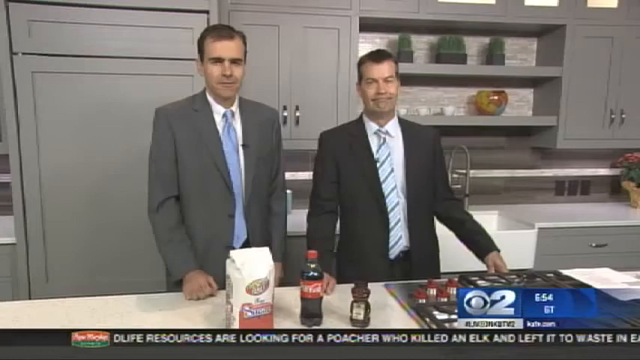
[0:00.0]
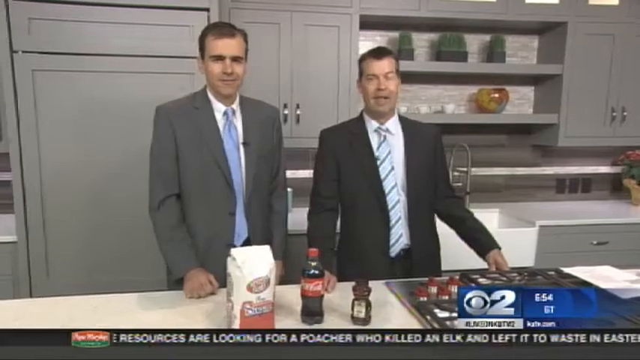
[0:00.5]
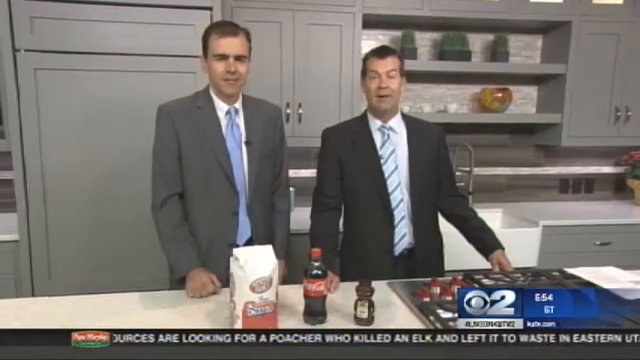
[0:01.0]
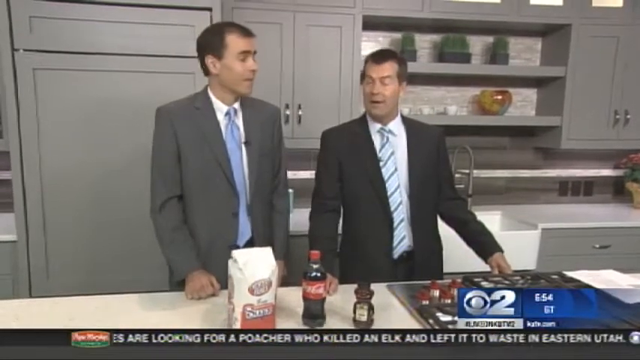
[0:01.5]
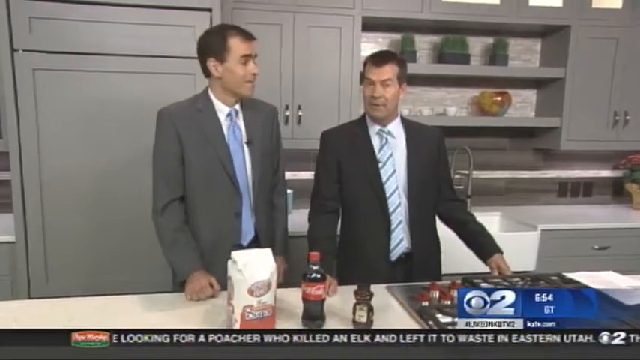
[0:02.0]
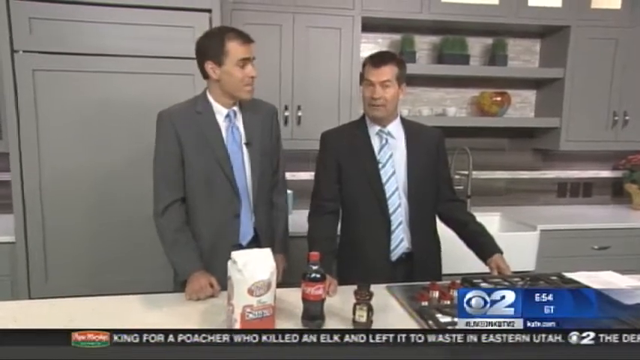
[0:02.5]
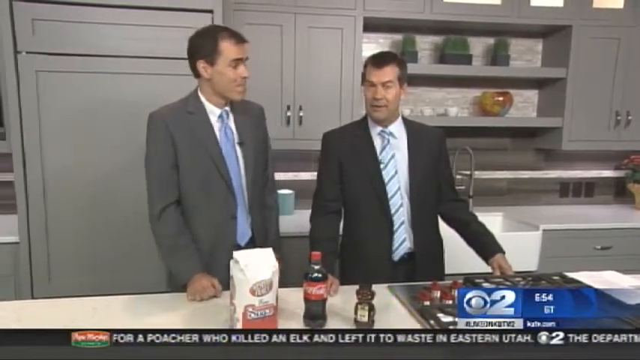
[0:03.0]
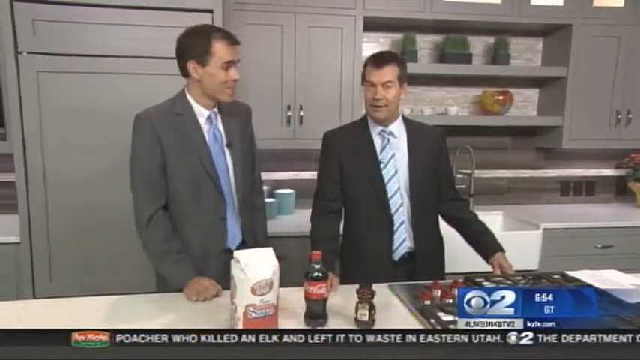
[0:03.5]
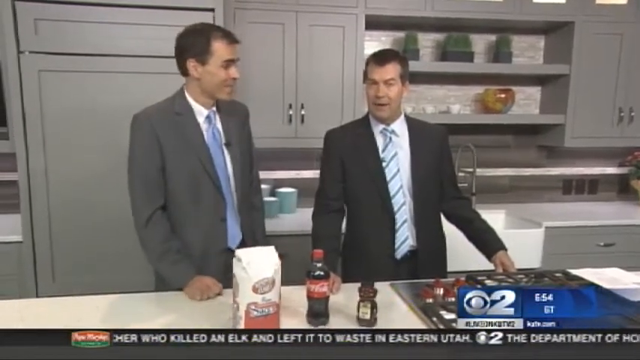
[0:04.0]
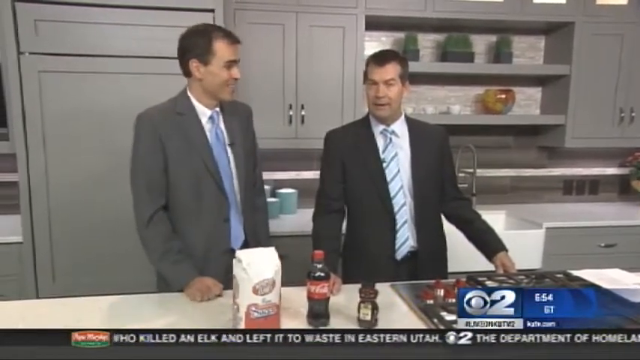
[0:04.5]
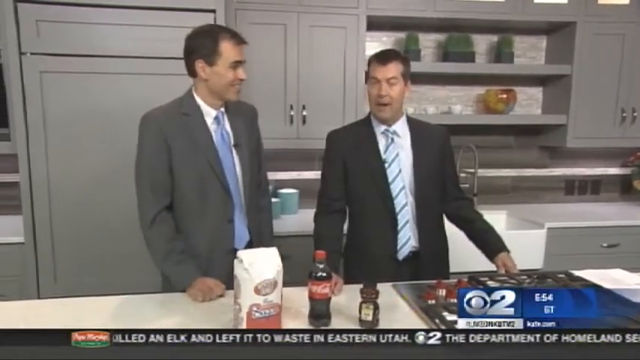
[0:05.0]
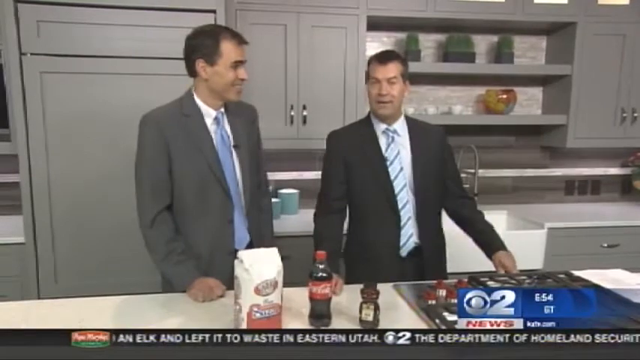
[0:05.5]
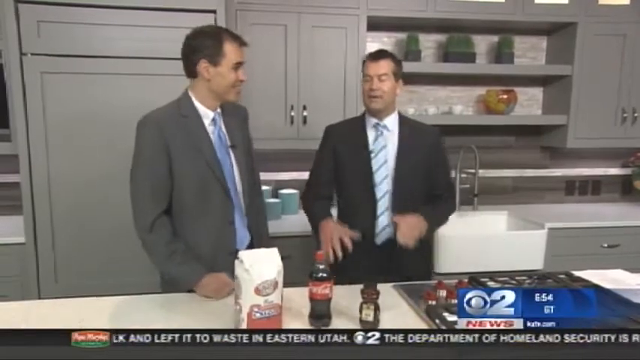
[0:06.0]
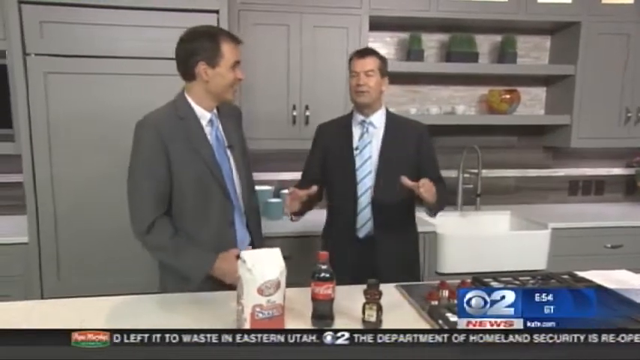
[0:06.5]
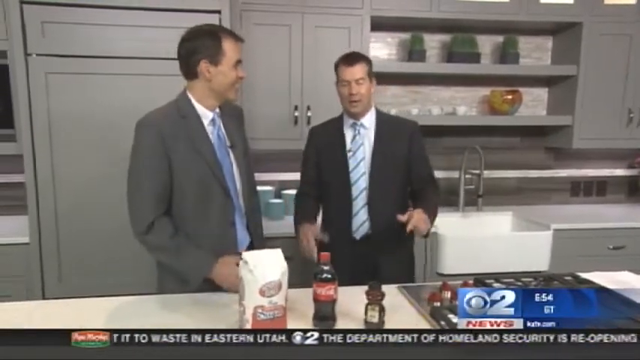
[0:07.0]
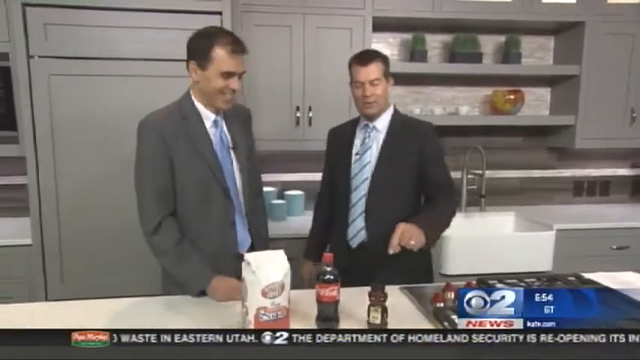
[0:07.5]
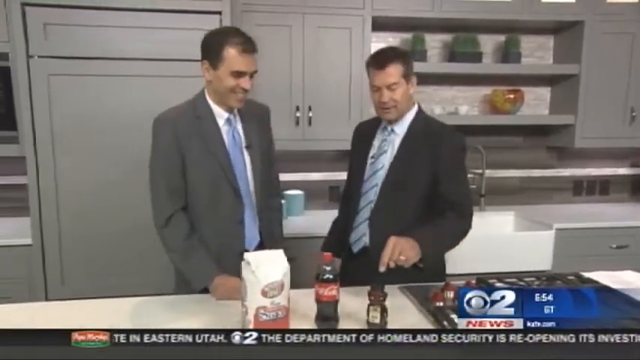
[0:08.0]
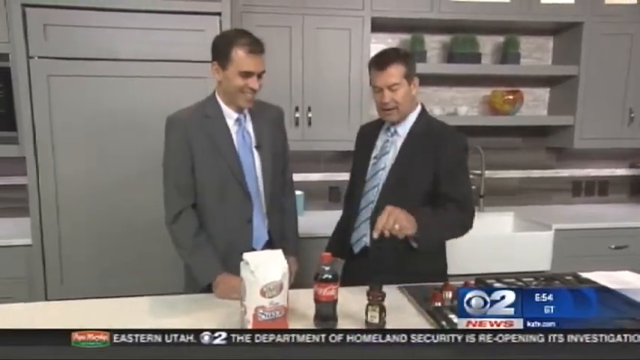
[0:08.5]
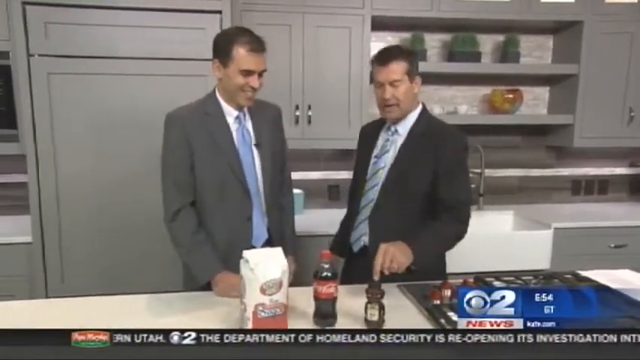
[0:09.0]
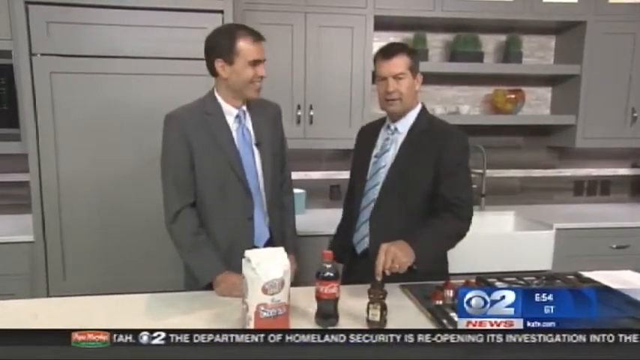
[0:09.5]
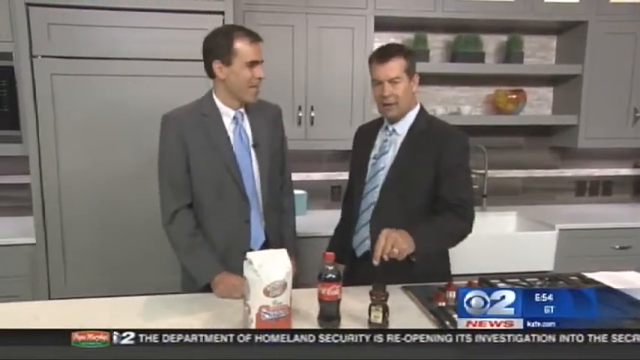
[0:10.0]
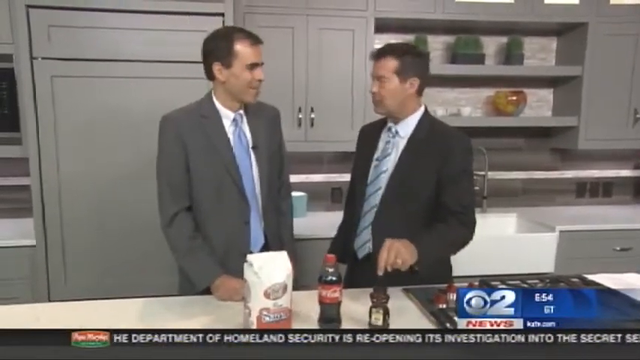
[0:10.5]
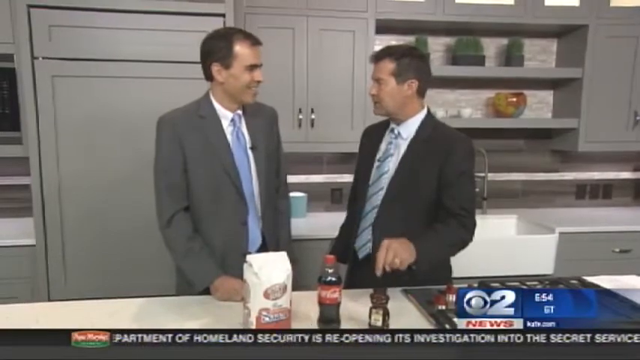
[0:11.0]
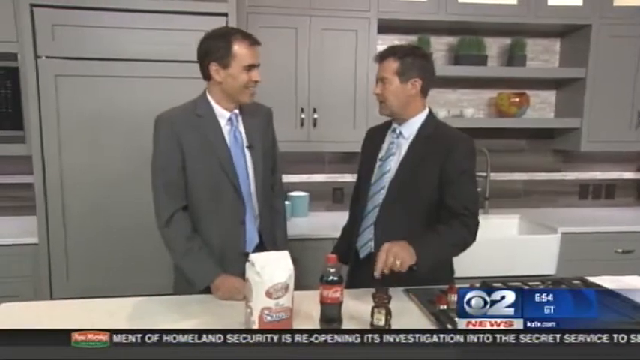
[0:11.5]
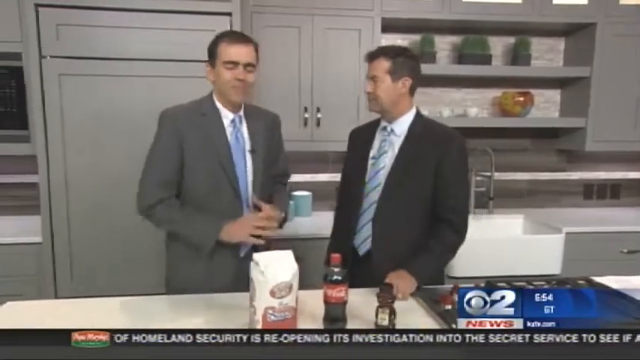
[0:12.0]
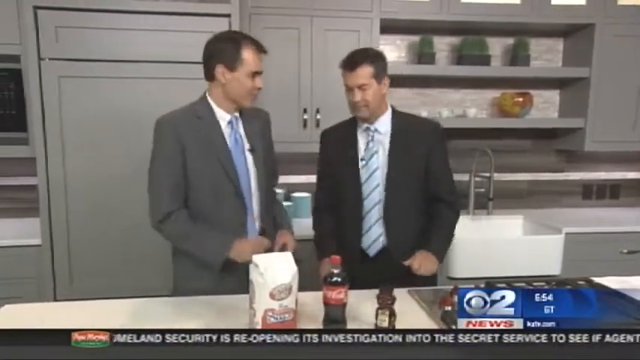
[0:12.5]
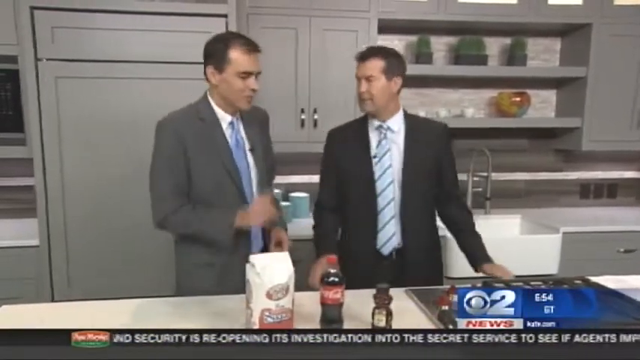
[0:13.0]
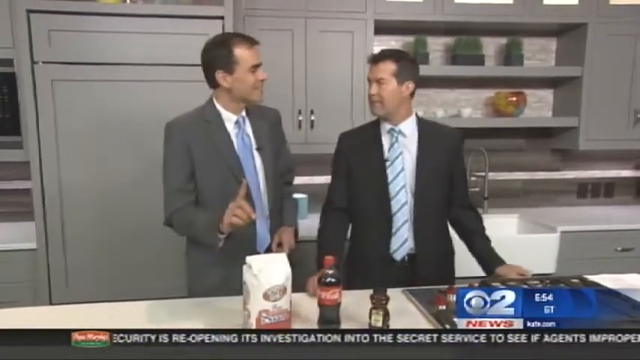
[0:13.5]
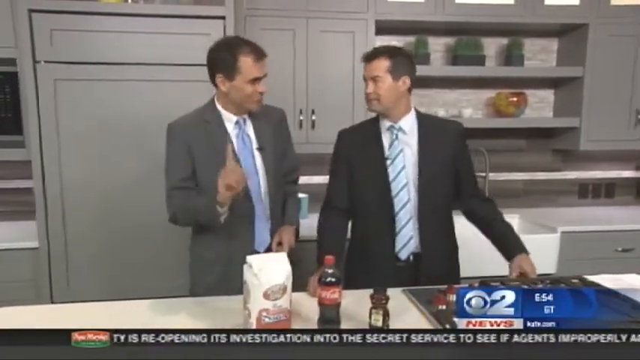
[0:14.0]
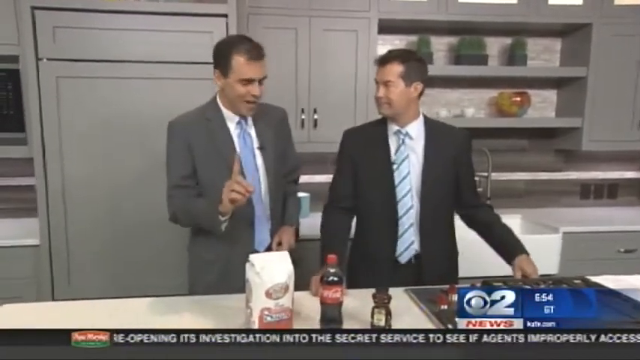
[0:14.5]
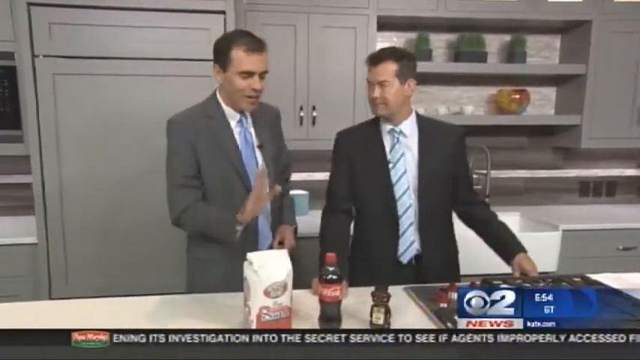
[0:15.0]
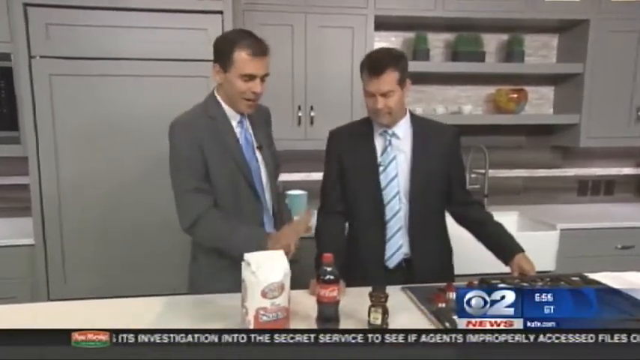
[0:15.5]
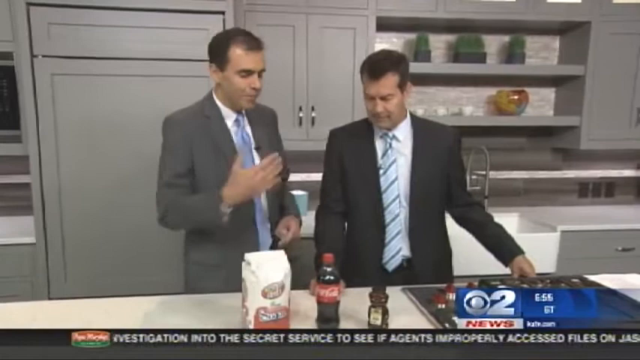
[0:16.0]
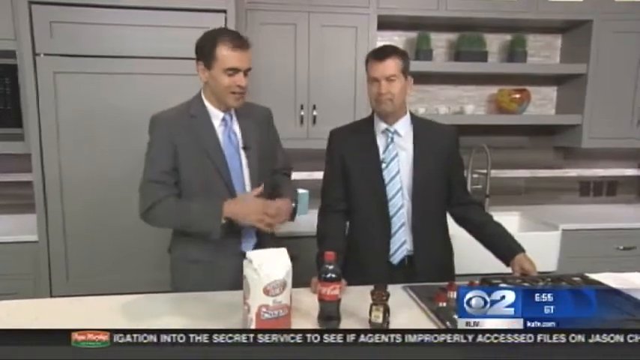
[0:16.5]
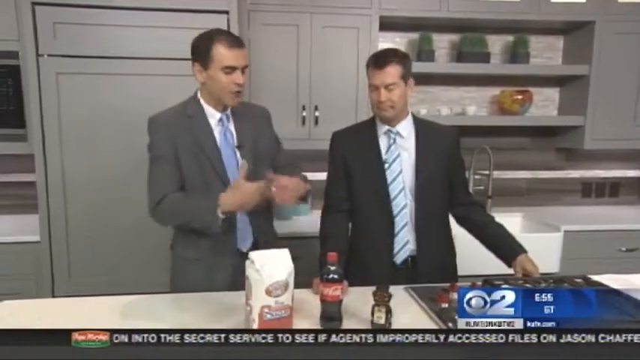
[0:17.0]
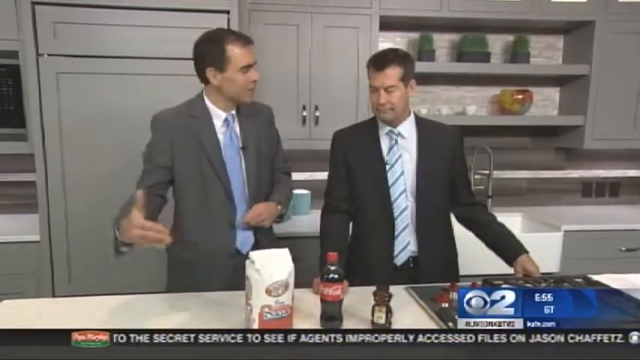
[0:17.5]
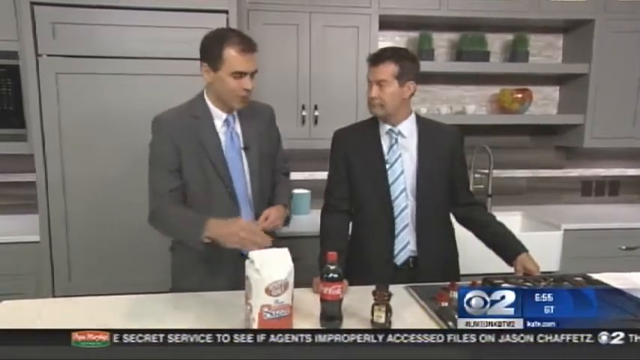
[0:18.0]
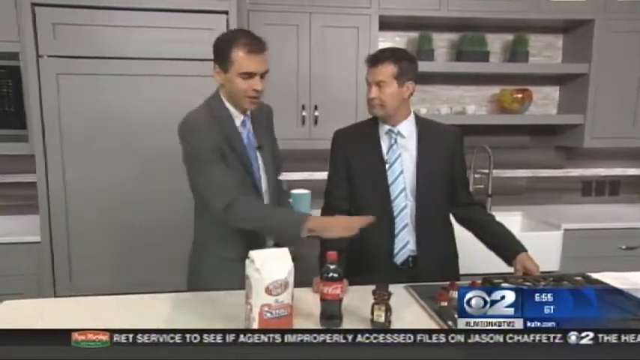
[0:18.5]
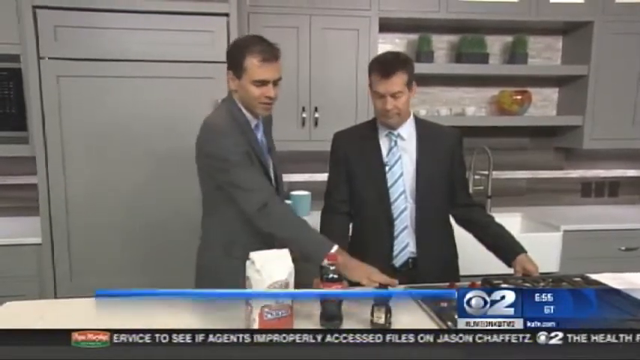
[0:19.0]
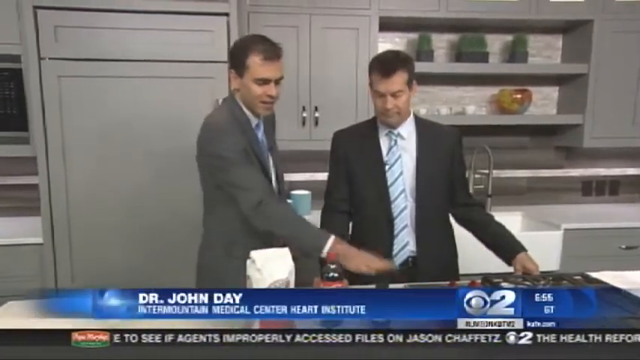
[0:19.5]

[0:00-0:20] Two male news anchors stand inside a modern kitchen. The anchor on the left looks to be in his late 40s or early 50s and wears a light gray suit jacket, a light blue tie and a white dress shirt. The anchor on the right is in his early 50s and wears a black blazer jacket, a striped white and blue tie and a white dress shirt. Both are light-skinned Caucasian men, and they stand looking directly at the camera. In front of them are a pack of flour, a small 20-ounce Coca-Cola and a bear-shaped bottle of honey. The left anchor slowly turns to look at the right anchor, who talks at a steady pace while looking straight ahead at the camera as the left anchor watches him. In the bottom right of the screen is a CBS logo with a large number two on the top left of the emblem and the word "news" in red letters underneath. The time shown is 6:54, and a news ticker runs headlines across the bottom of the screen from right to left. The right anchor looks down at the countertop and points his index finger at the dark brown honey bear, tapping it five times while talking, then looks over at the other anchor. The left anchor starts to talk while looking at his partner, then looks down at the middle bottle, the Coca-Cola, and brings his hand down toward the countertop.